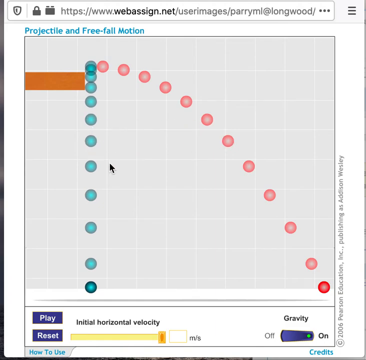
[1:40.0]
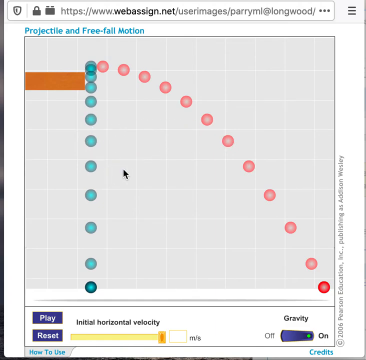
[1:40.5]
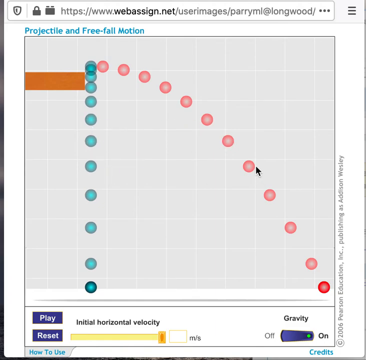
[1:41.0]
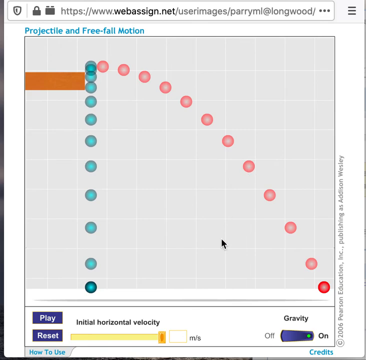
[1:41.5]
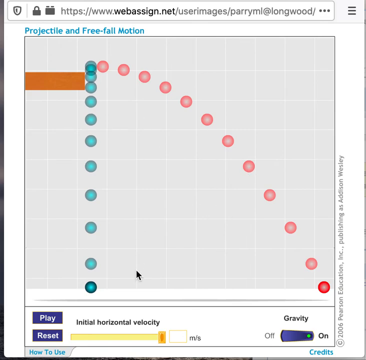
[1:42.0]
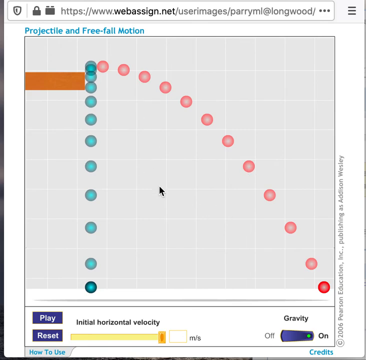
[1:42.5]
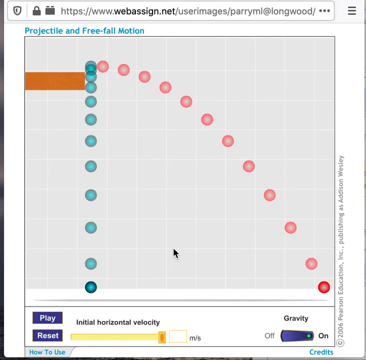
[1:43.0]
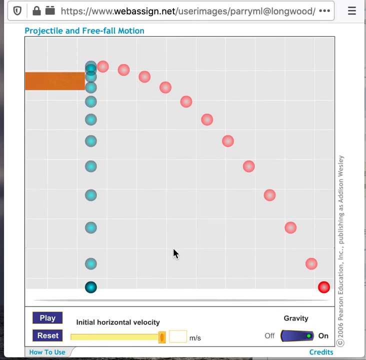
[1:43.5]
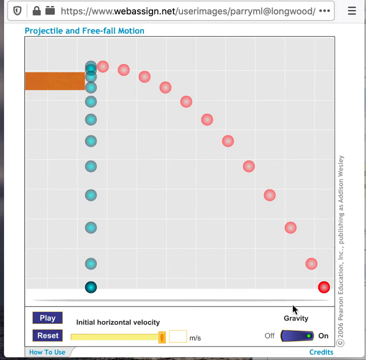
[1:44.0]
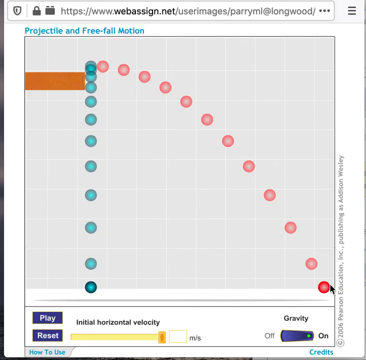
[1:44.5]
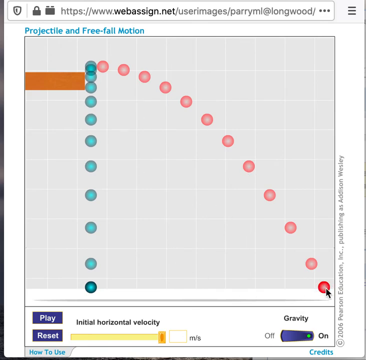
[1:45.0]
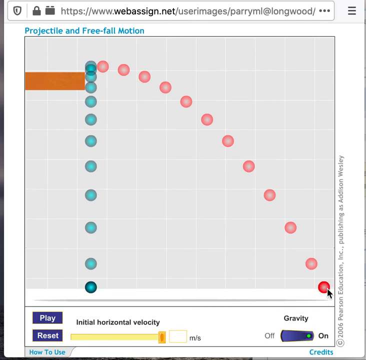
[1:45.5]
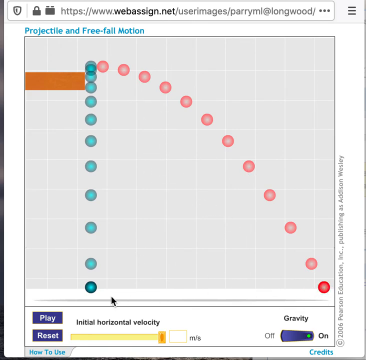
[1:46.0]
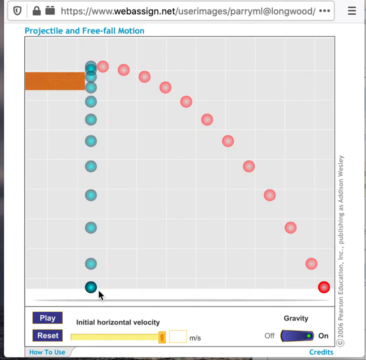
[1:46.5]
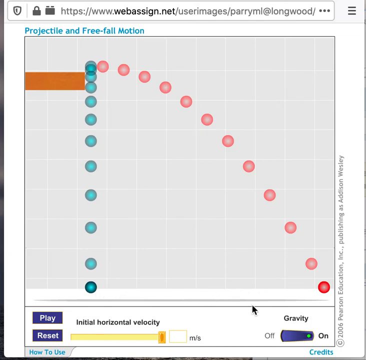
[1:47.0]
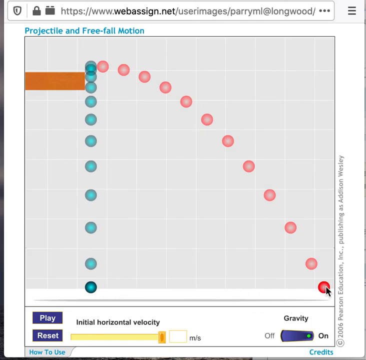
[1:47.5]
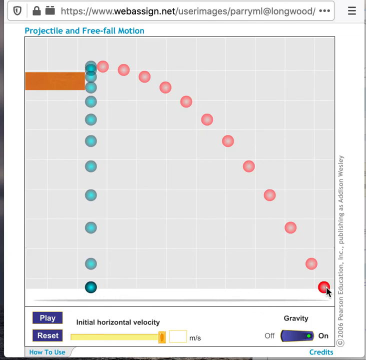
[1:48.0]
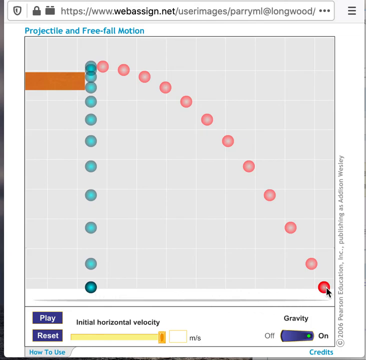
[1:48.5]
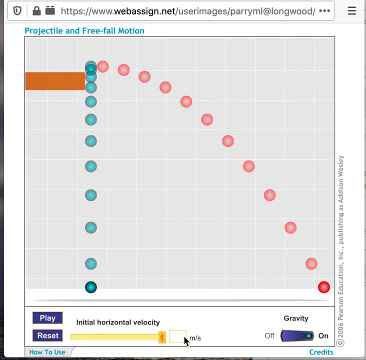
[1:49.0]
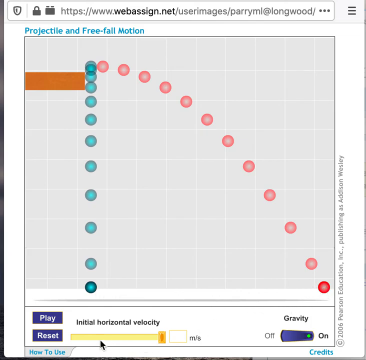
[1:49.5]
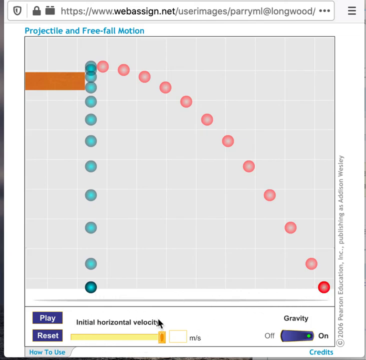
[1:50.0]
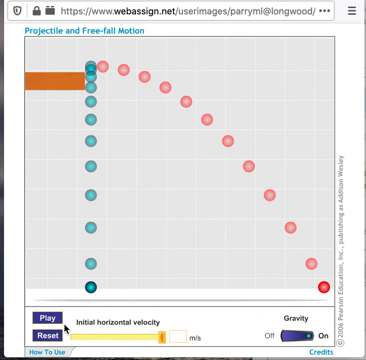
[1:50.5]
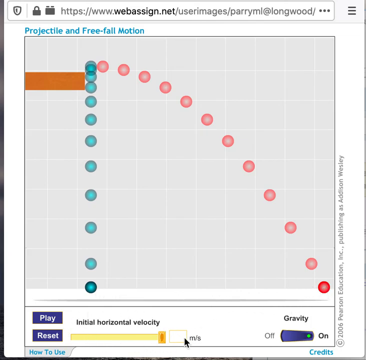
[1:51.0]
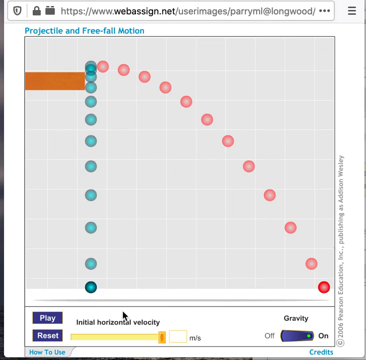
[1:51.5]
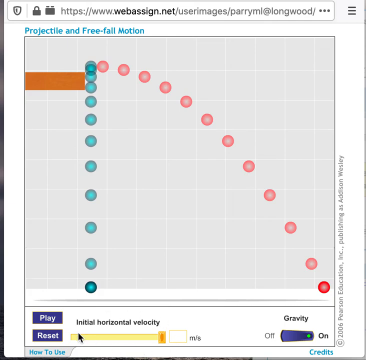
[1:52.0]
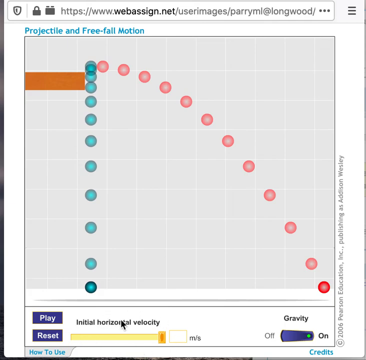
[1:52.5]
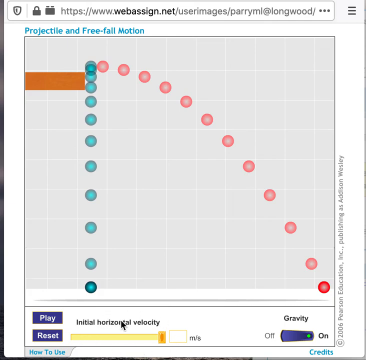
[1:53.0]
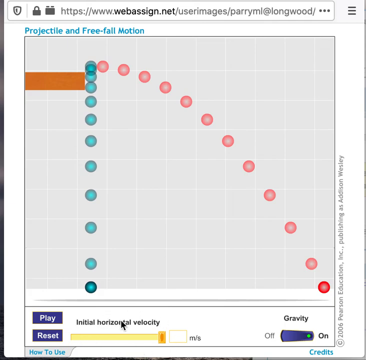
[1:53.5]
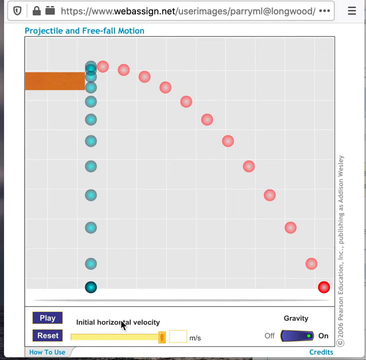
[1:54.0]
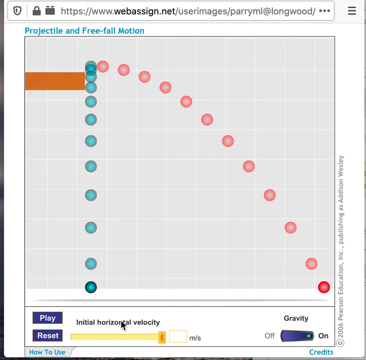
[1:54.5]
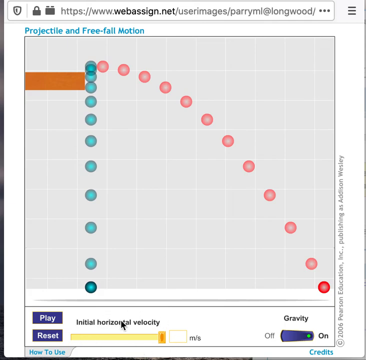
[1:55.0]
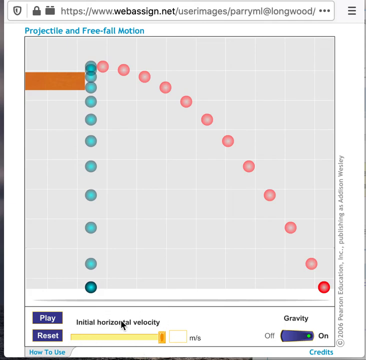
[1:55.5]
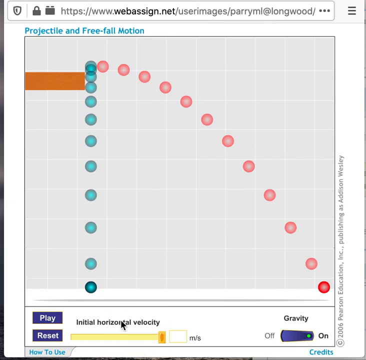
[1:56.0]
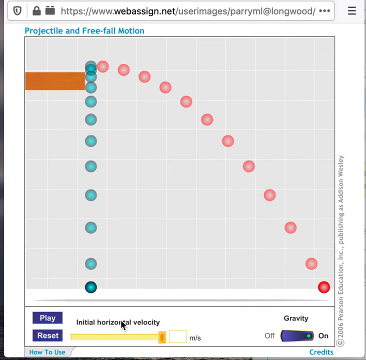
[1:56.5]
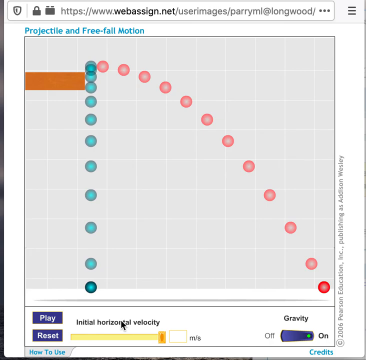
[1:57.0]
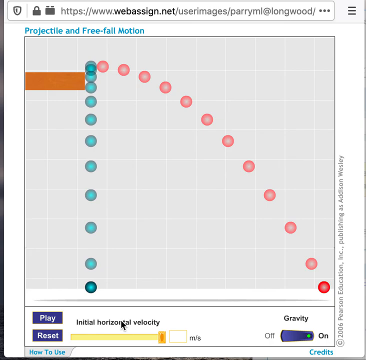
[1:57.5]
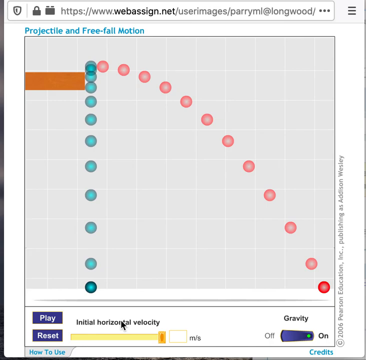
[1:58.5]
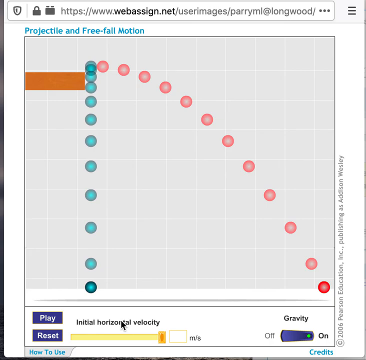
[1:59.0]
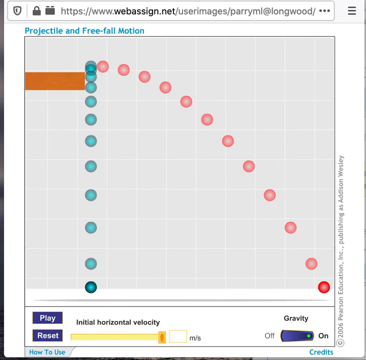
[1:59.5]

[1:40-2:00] A white search bar at the top of the screen reads "www.webassign.net\user images". Below it is a screen made up of light gray squares, vertical and horizontal. In the bottom left-hand corner are two blue rectangles, the top one with "PLAY" written in white and the bottom one with "RESET" written in white. To the right is a yellow line with "Initial Horizontal Velocity" written above it in black. In the bottom right-hand corner is a blue rectangle with "OFF" at its left end and "ON" at its right end, and "GRAVITY" written above it in black. In the top left corner of the gridded screen is a brown rectangle. In front of it, blue balls go from the very front of the rectangle straight down to the ground, and a red ball shoots out from the rectangle down to the bottom right corner of the screen. A person moves their mouse on the screen, shown as a black arrow.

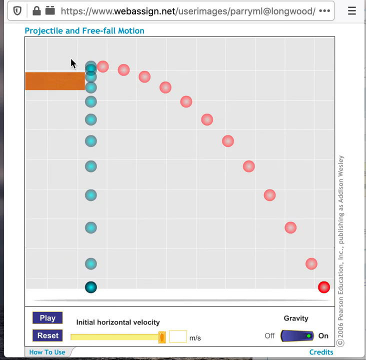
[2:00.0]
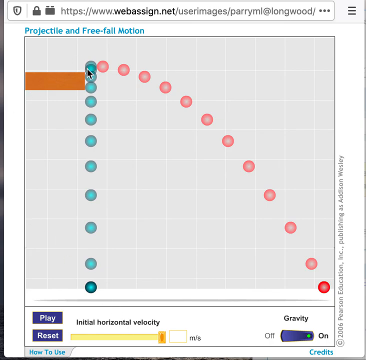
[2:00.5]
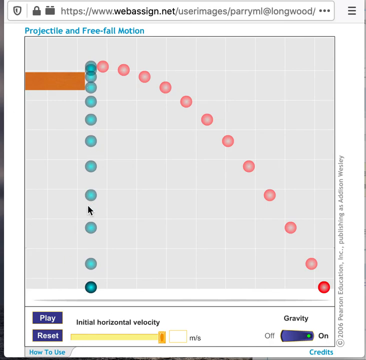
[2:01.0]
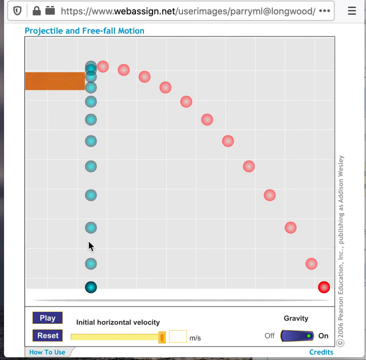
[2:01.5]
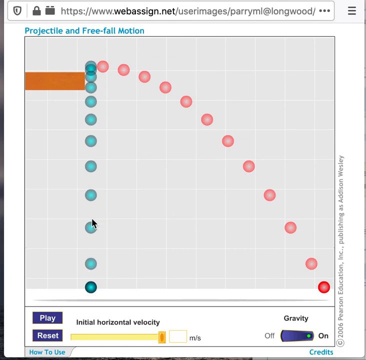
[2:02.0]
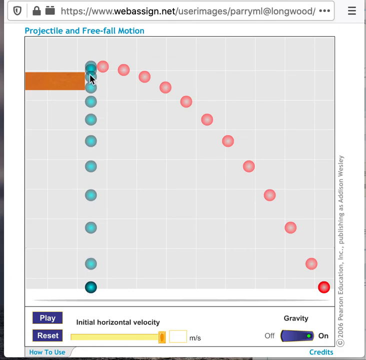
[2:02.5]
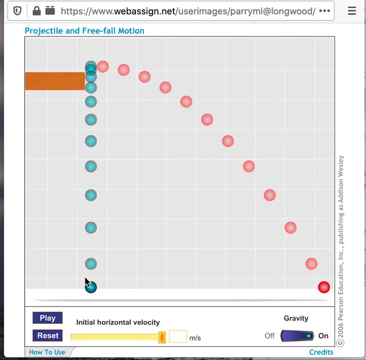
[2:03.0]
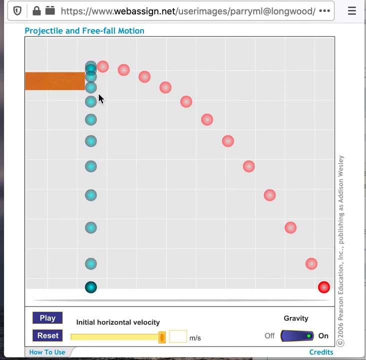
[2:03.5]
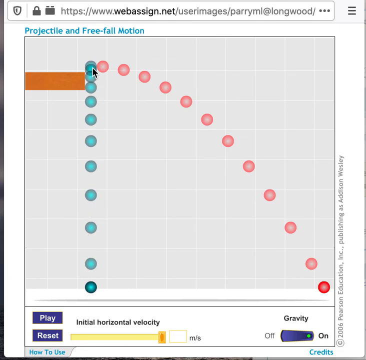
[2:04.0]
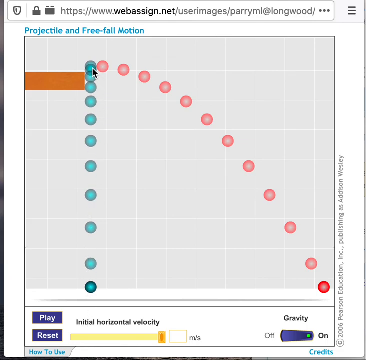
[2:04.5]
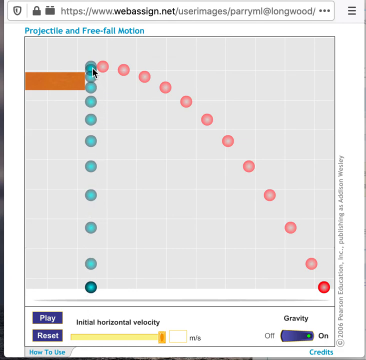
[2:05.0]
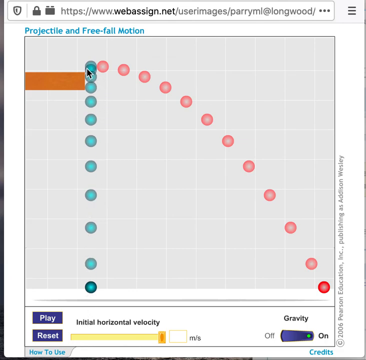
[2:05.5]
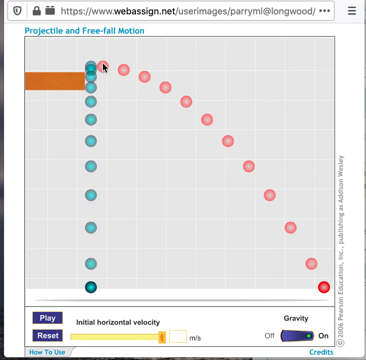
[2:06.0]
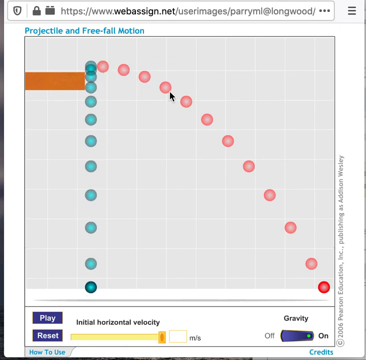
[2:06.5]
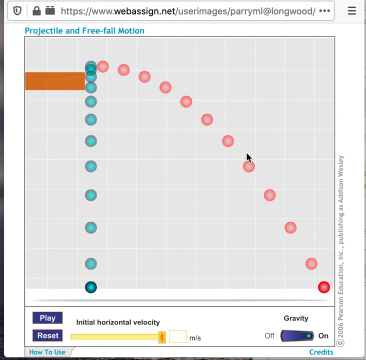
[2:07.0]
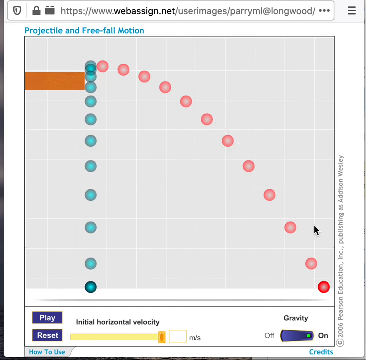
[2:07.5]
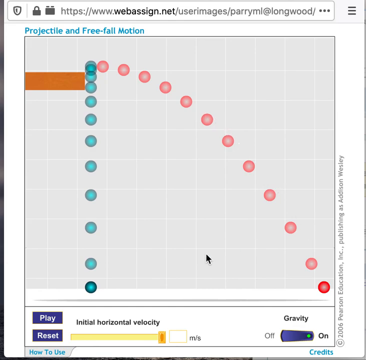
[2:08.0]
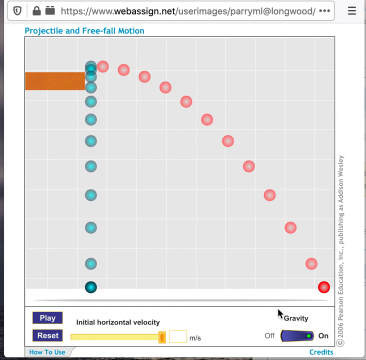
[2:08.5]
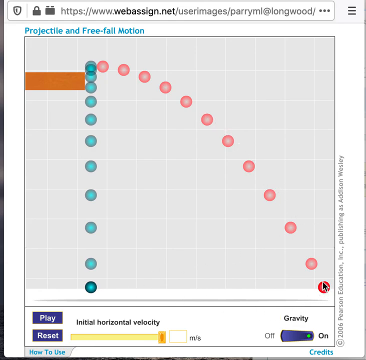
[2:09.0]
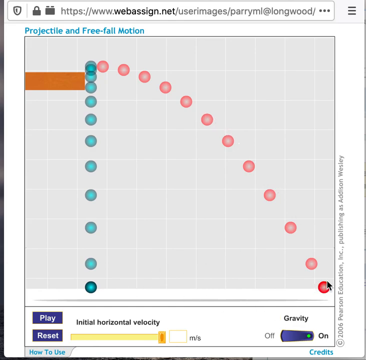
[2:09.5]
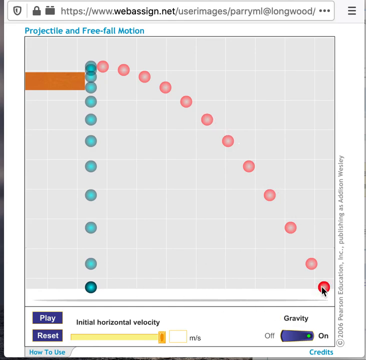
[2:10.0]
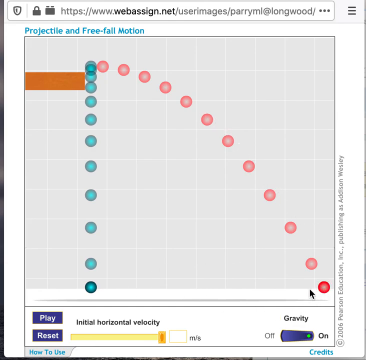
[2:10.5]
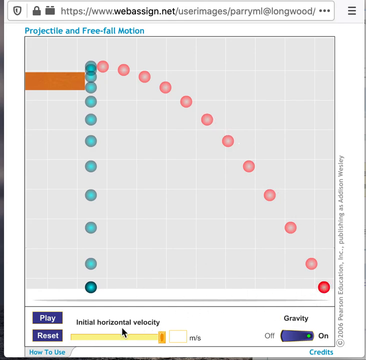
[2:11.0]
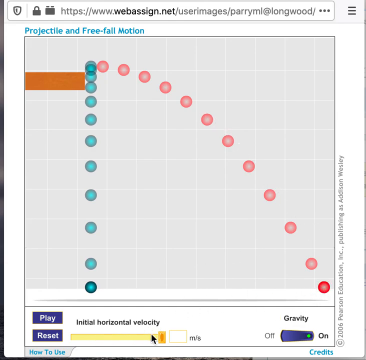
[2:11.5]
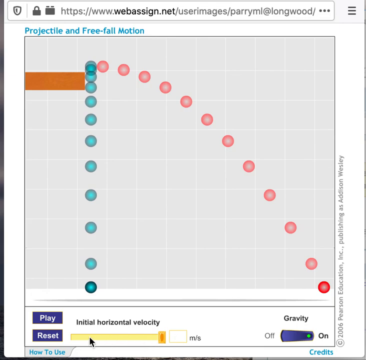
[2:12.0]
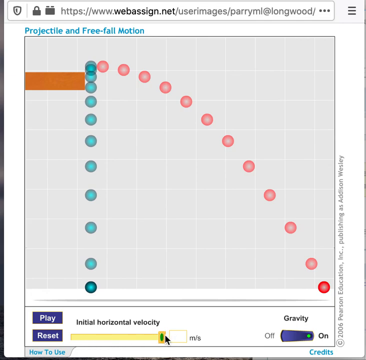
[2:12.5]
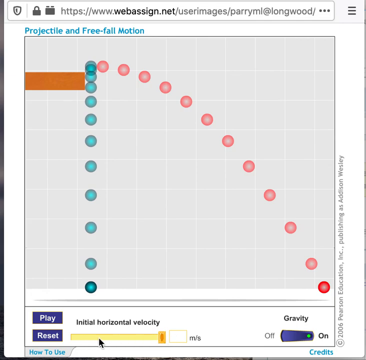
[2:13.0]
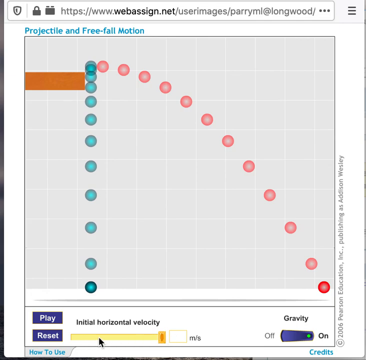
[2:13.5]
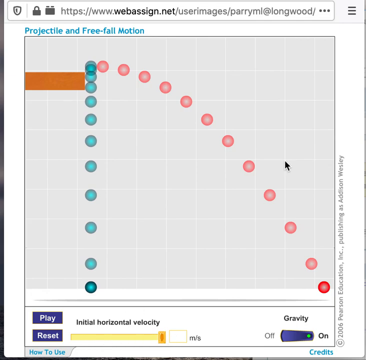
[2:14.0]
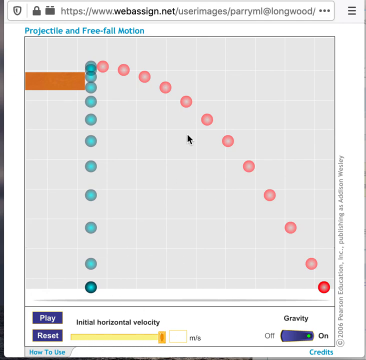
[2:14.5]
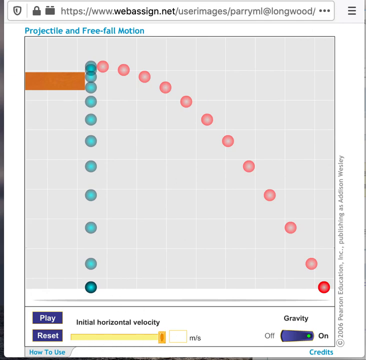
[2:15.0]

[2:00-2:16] A search bar at the top of the screen reads "www.webassign.com\user images". Below it is a screen made up of light gray squares, horizontal and vertical. In the bottom left-hand corner are two blue rectangles, one on top of the other; the top one has "play" written in white and the bottom one has "reset" written in white. To the right is a yellow line with "initial horizontal velocity" above it in black. In the bottom right-hand corner is a blue rectangle with "off" on its left side and "on" on its right side, and "gravity" above it in black. In the top left-hand corner of the gray gridded screen is a brown rectangle. A blue ball comes straight down from in front of the rectangle, leaving a visible line of balls, and a red ball is shot out from the rectangle over to the bottom right corner, leaving a visible line of red balls. Someone uses their pointer to point out what has happened on the screen.